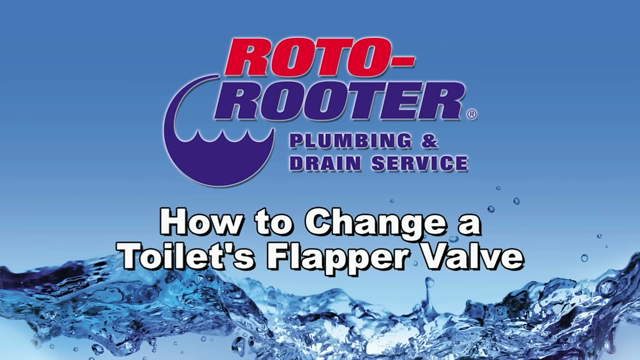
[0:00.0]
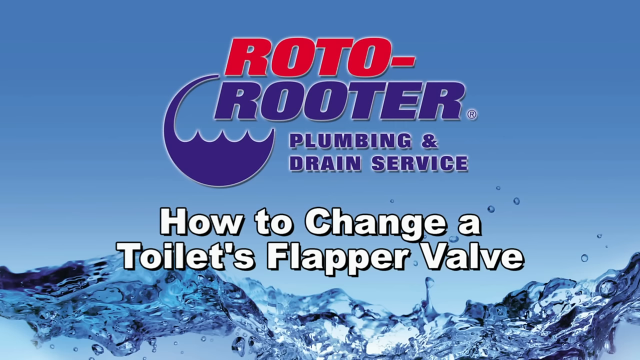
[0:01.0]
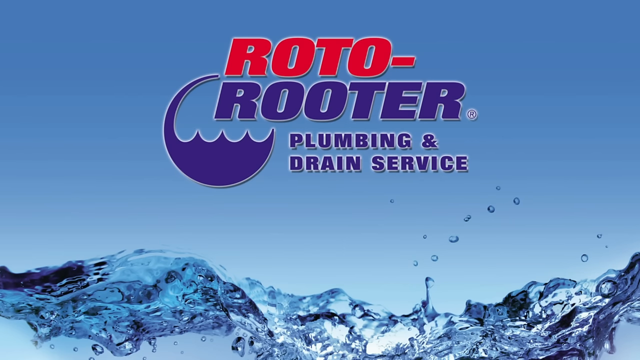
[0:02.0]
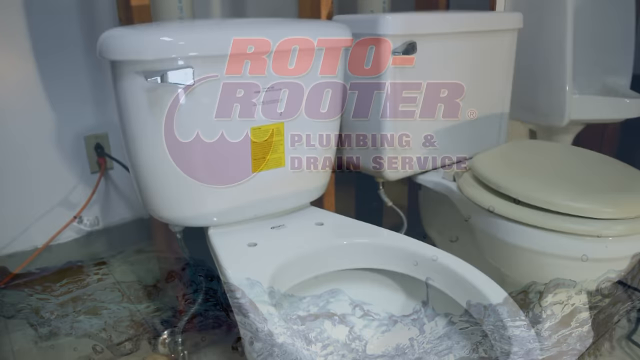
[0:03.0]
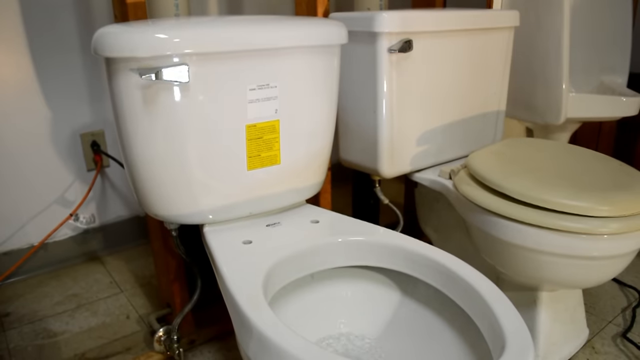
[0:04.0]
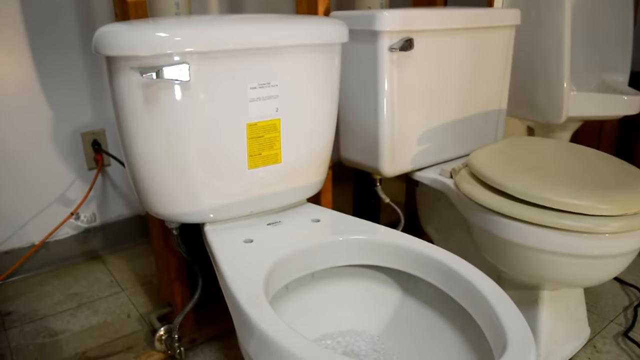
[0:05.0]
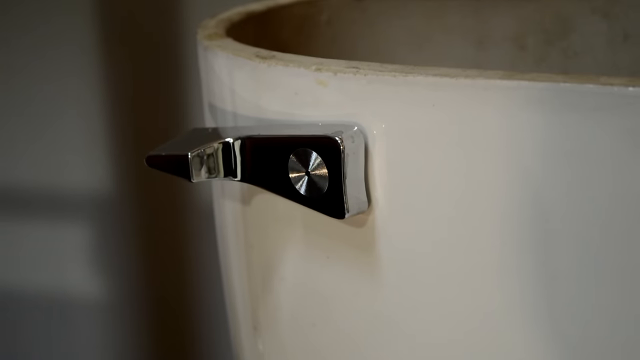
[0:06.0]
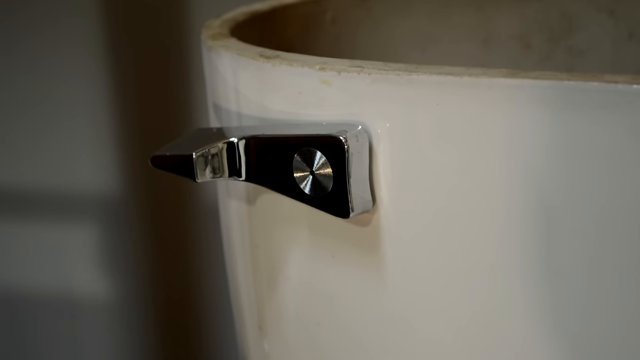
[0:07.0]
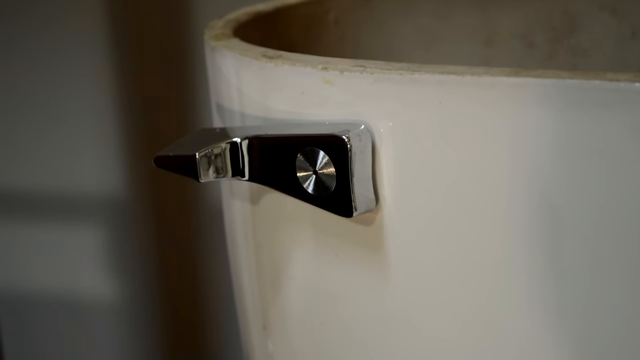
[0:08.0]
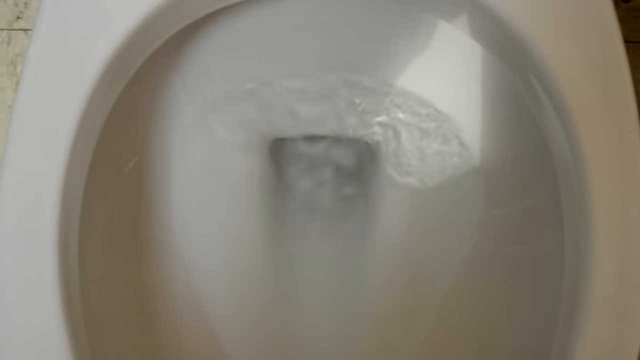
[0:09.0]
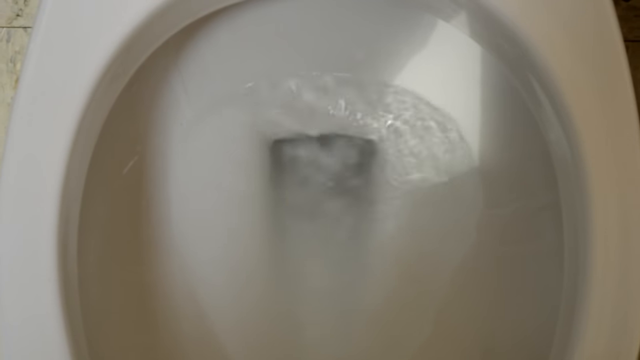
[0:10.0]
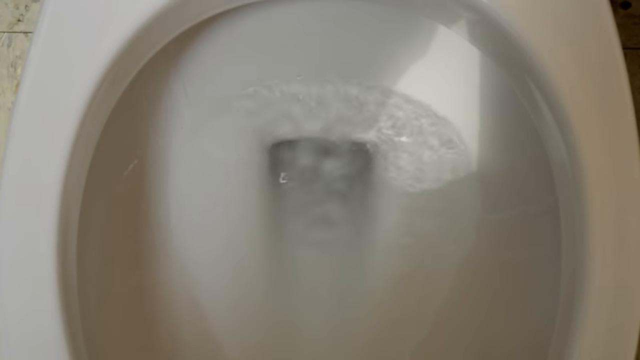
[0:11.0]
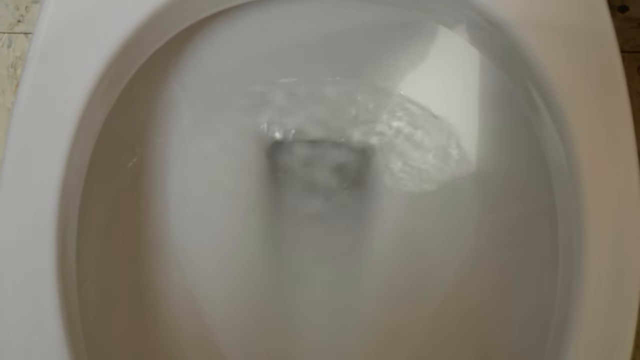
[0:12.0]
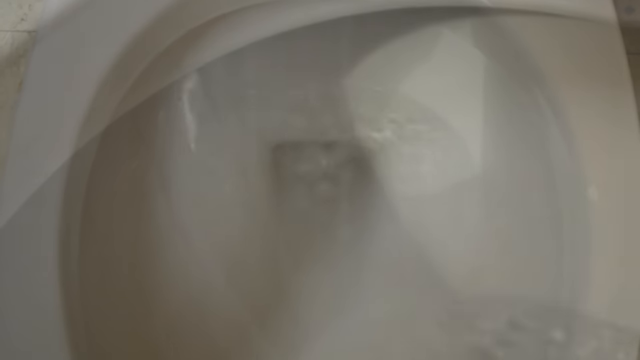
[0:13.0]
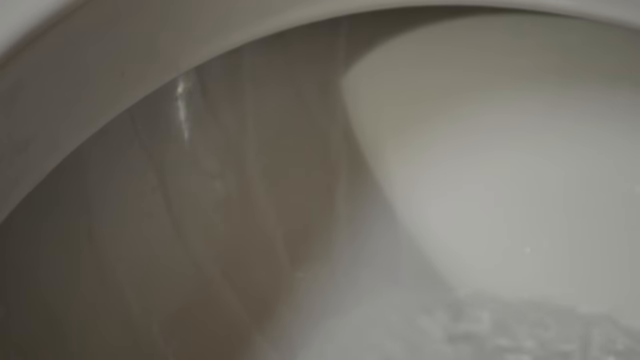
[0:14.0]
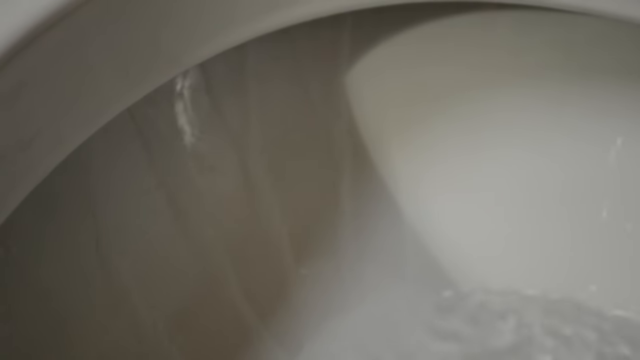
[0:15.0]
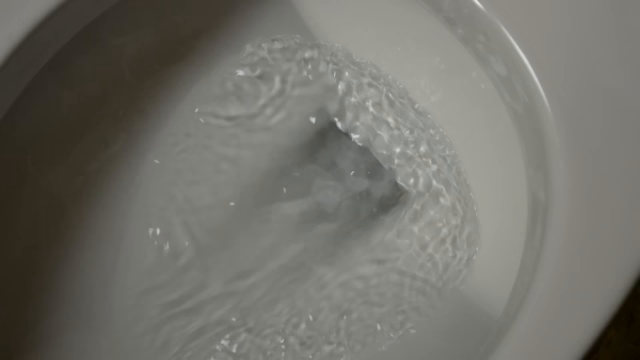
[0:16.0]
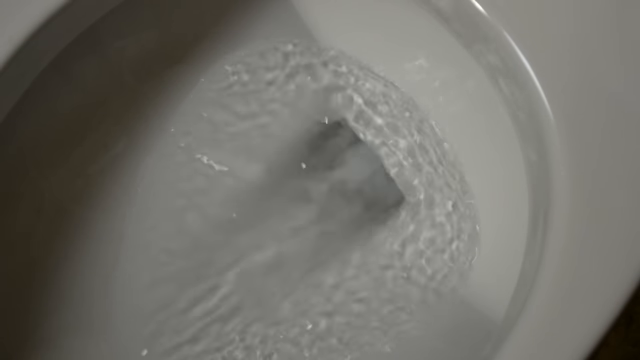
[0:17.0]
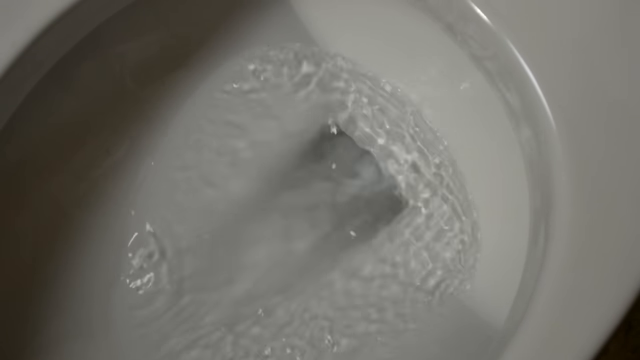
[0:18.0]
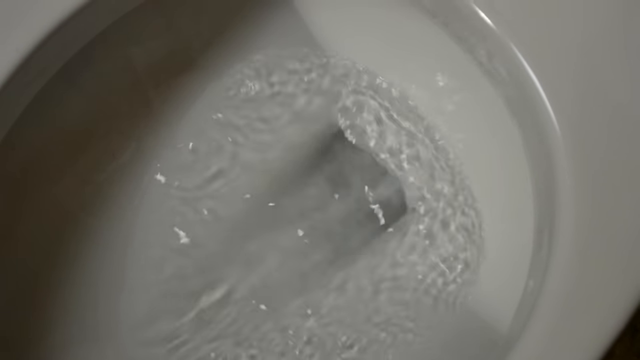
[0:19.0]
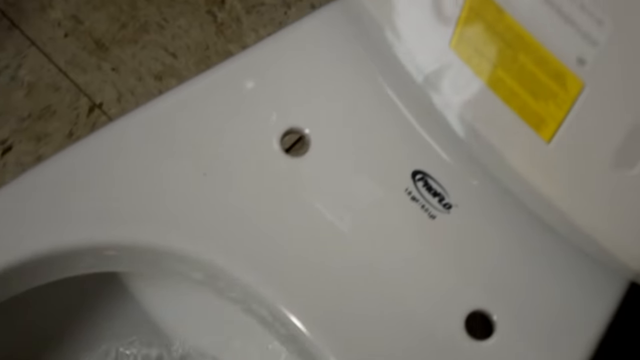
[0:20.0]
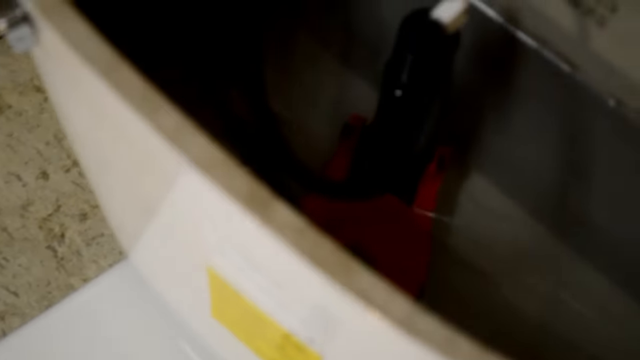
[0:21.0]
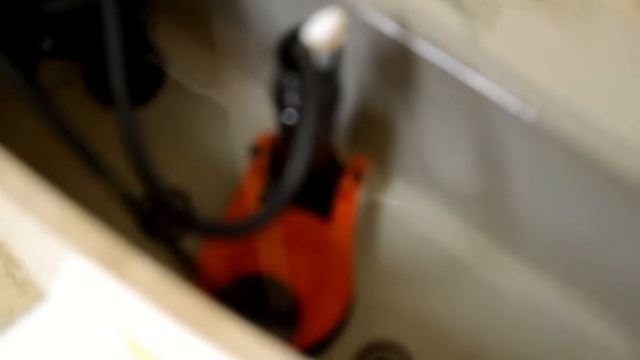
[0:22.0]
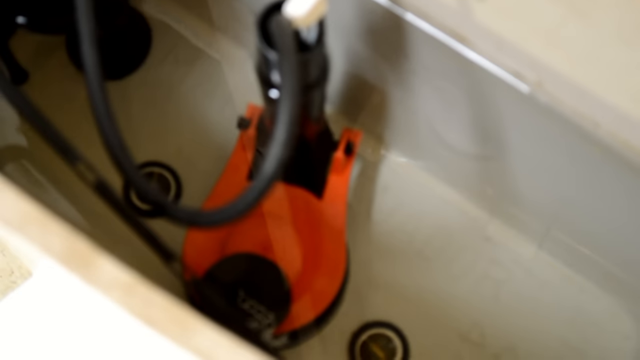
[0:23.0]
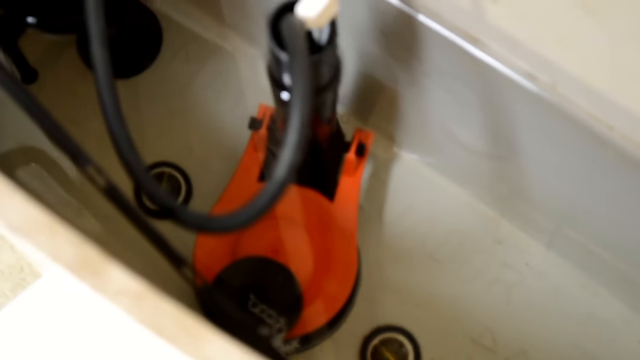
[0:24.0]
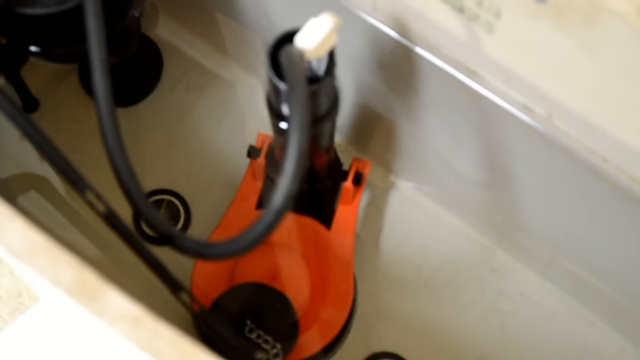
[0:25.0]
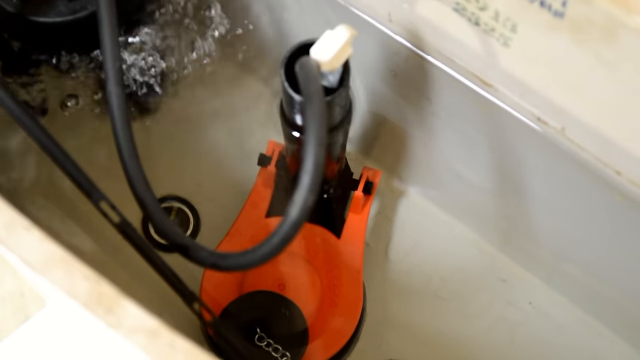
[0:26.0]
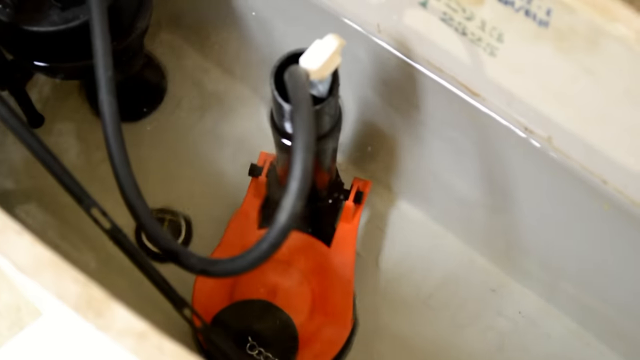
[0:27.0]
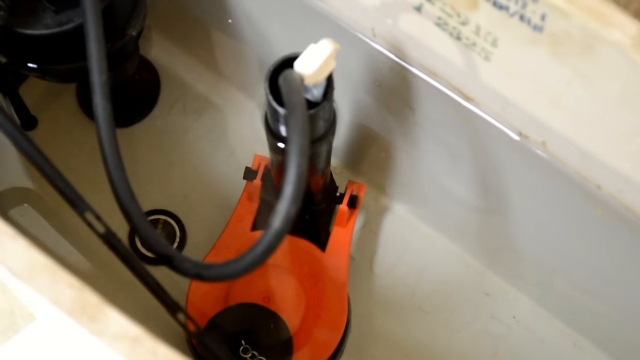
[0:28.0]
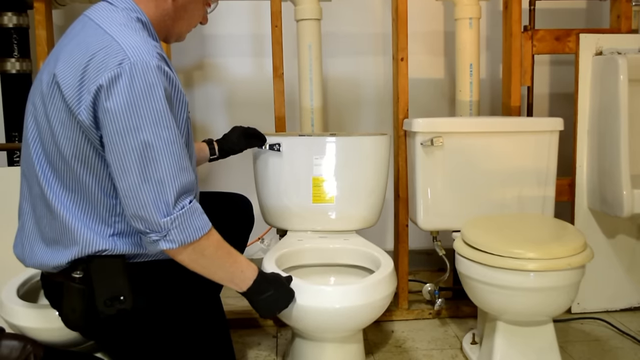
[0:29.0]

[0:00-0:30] A title card for a plumbing and drain services company appears on a blue background that is darker blue at the top and grows lighter toward the bottom, with water along the bottom of the image. On the lower side is the text "how to change the toilet's flapper valve", and the company's icon appears right next to its name. The scene then changes to two toilets that are not connected to the pipe, and the water inside one is always running, which is the issue. A plumber looks inside to see what is causing the problem. The water slowly goes down, and he tests it. The plumber wears clothes meant to keep him clean, along with gloves.